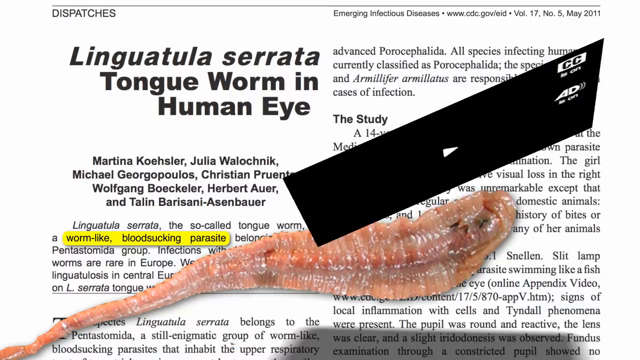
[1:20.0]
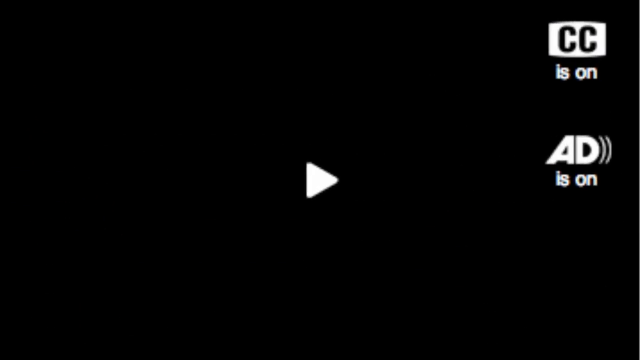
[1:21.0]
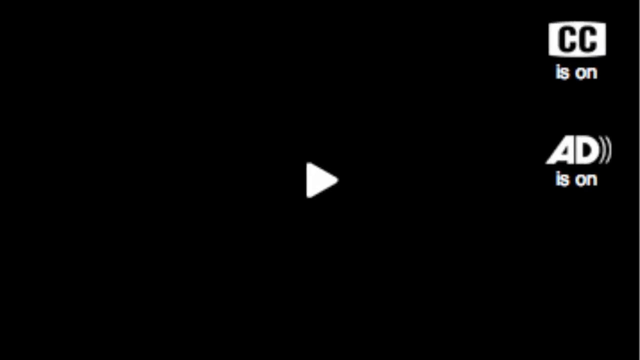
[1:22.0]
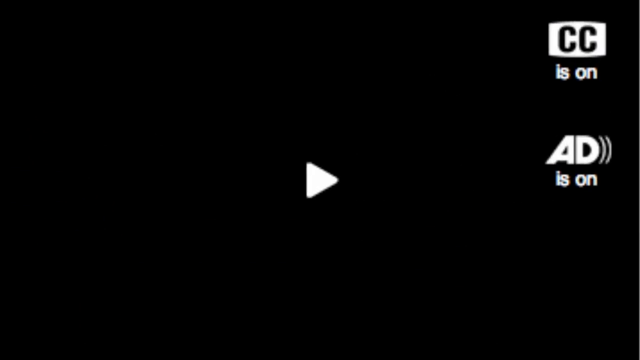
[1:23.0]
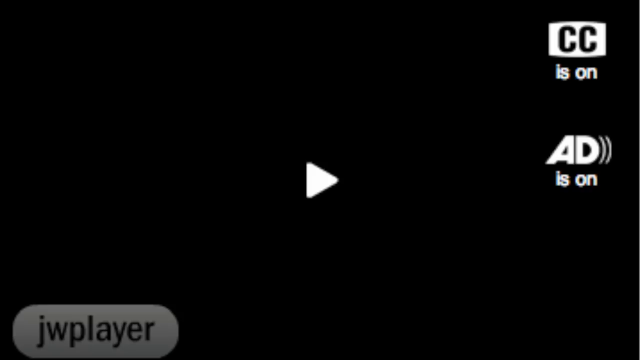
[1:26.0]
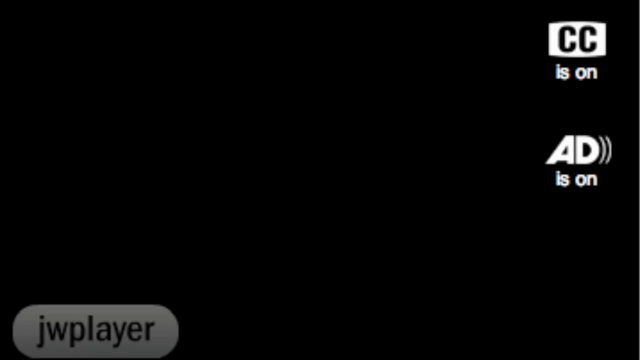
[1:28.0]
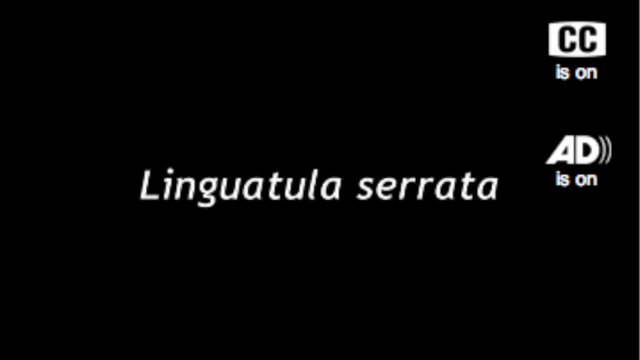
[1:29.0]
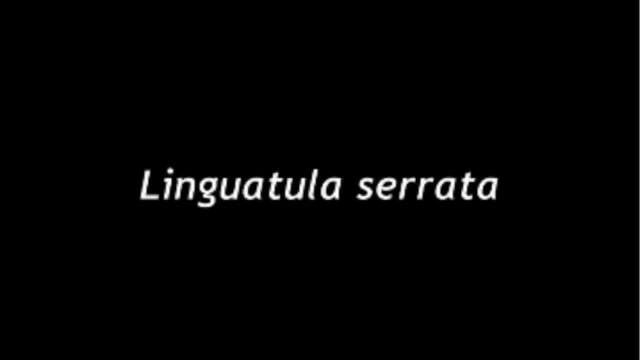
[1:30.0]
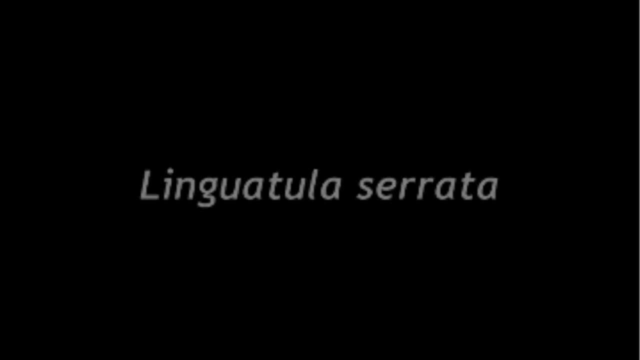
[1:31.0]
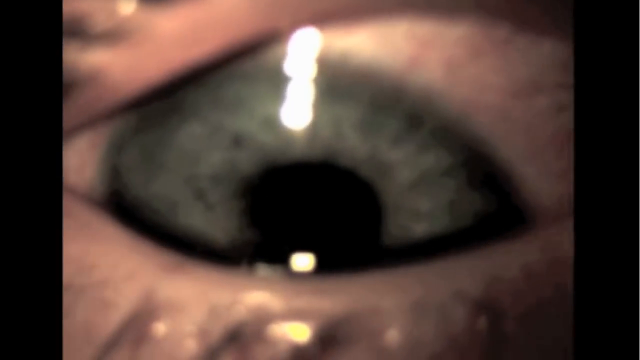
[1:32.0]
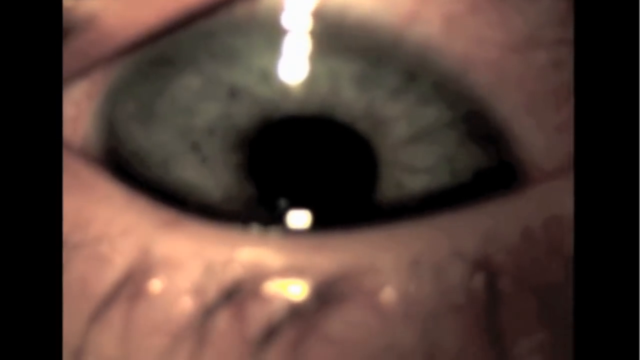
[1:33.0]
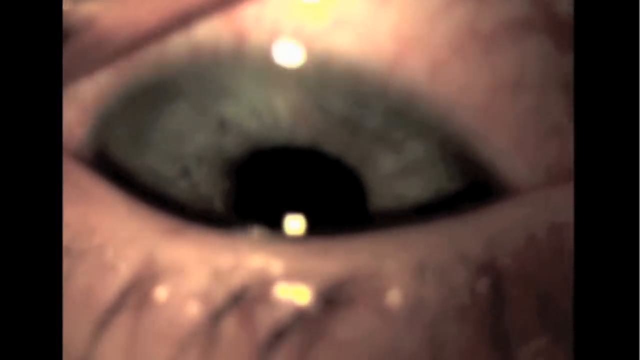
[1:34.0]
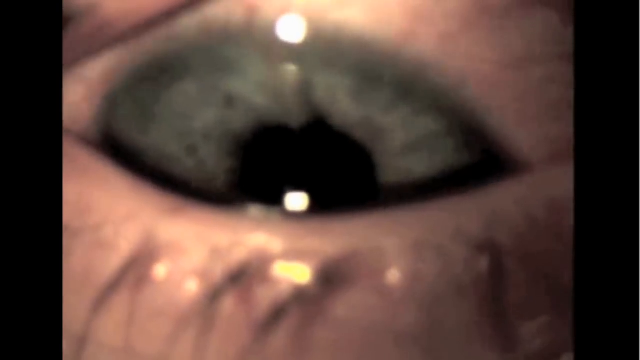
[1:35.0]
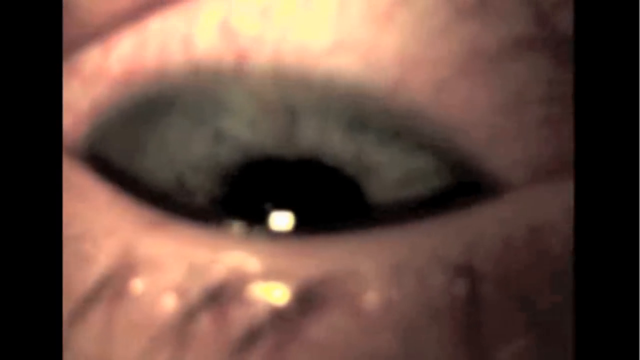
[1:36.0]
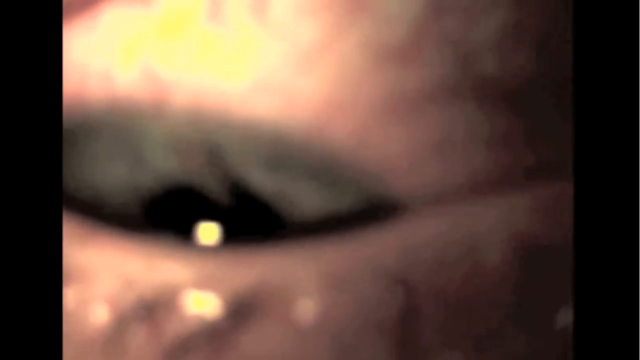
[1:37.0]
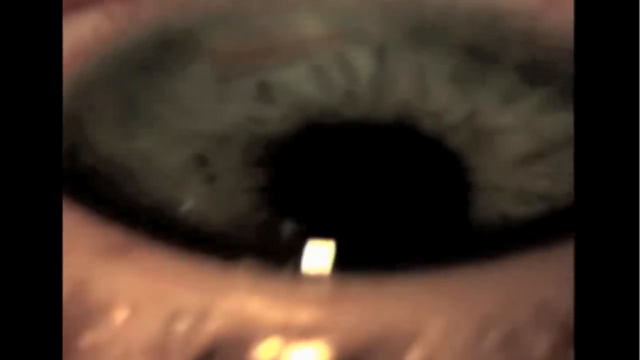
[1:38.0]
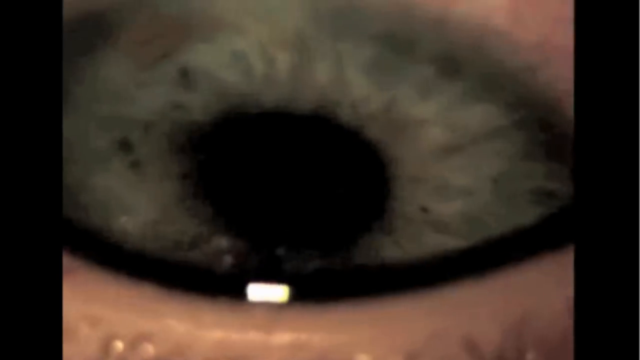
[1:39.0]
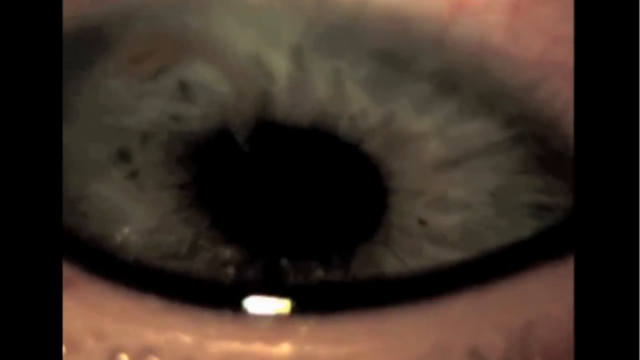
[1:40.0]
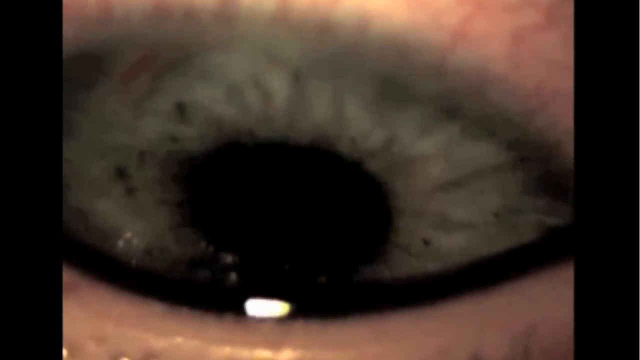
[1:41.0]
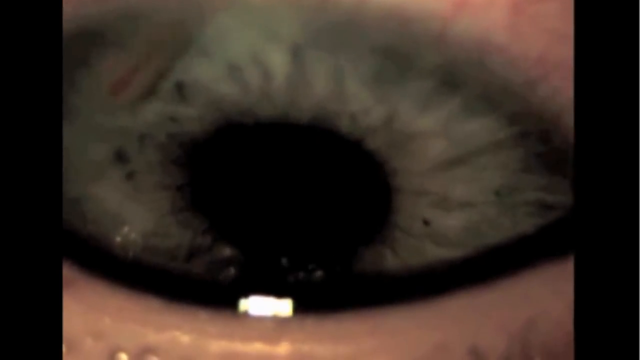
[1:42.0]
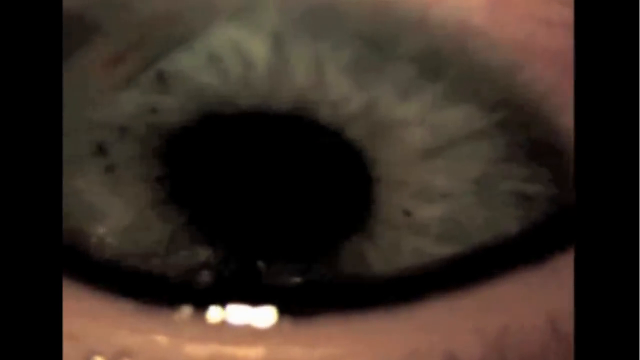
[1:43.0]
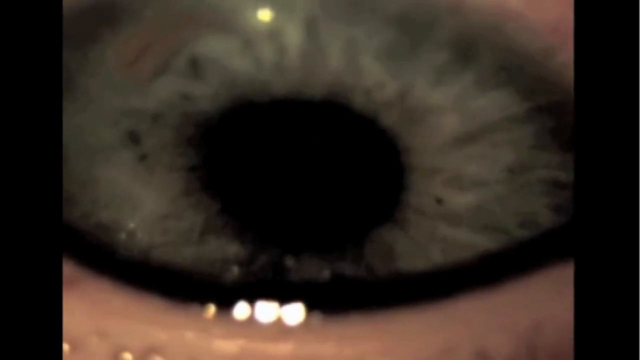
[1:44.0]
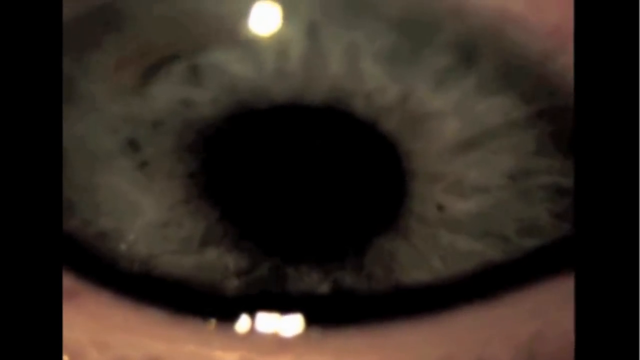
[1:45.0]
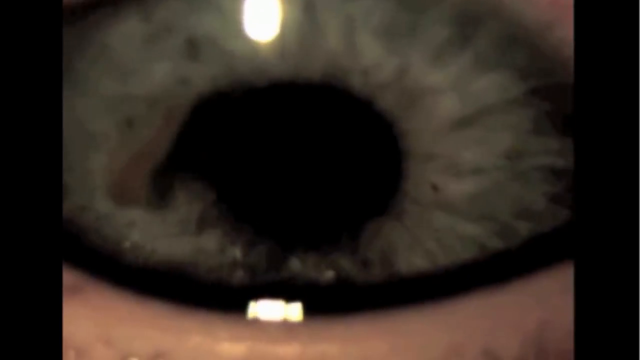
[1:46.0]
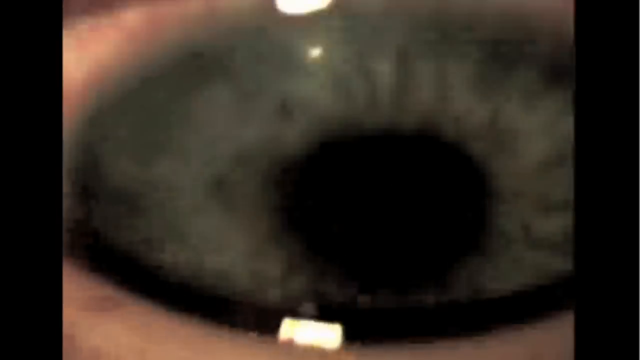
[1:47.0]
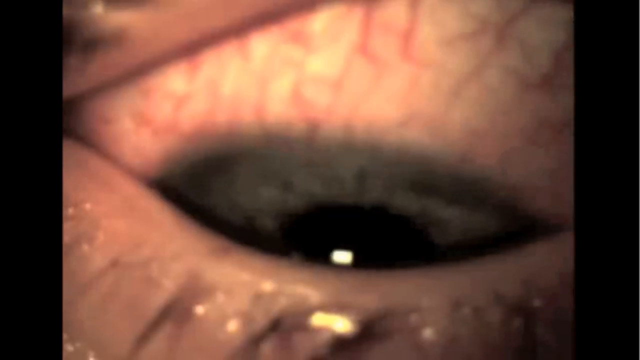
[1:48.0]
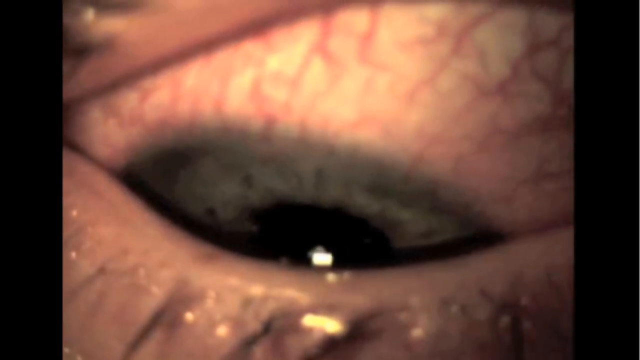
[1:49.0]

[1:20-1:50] A news article with a parasite on top of it is shown over words written in a black font against a white background. The screen then goes black for several seconds, with the words "JW Player" on a white background in the bottom left-hand corner at the beginning of the video that follows. A small logo in the upper right-hand corner says "CC is on, AD is on, scientific name." The video shows a human eyeball with a parasite swimming inside it, right in front of her pupil and iris. She is blinking but trying not to, and even when she blinks her eye is held open for an examination. She has blue eyes and dark eyelashes, and it appears to be quite an uncomfortable situation for the patient.